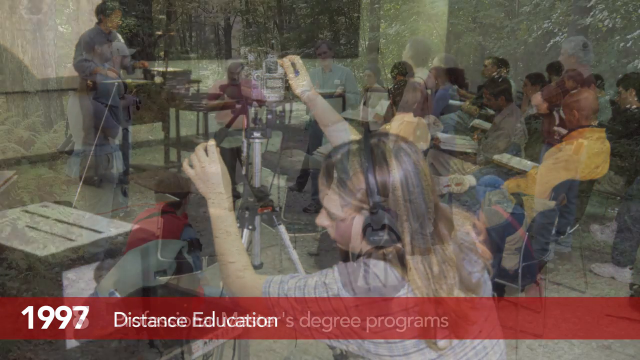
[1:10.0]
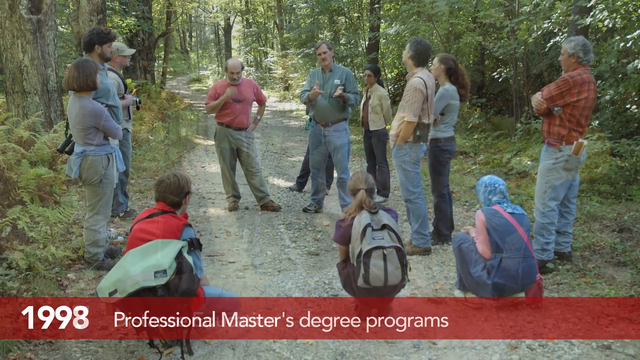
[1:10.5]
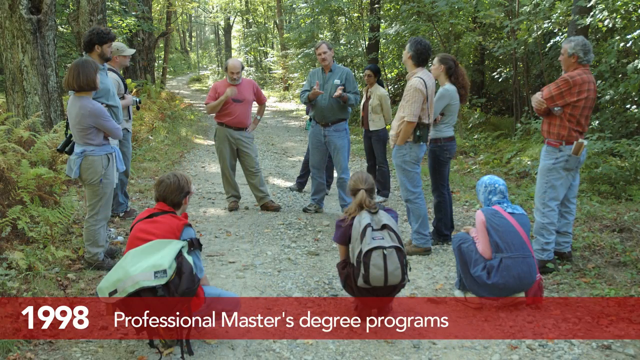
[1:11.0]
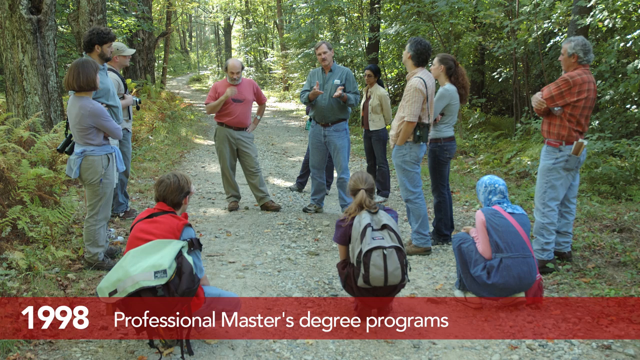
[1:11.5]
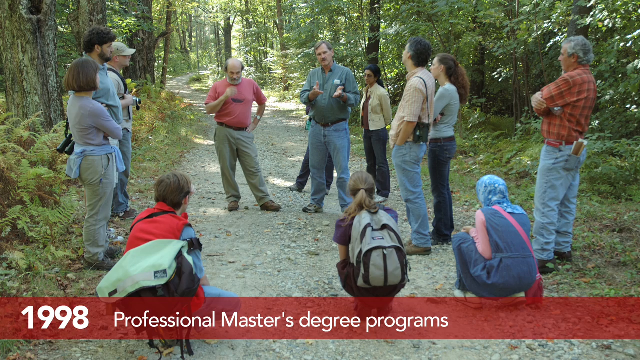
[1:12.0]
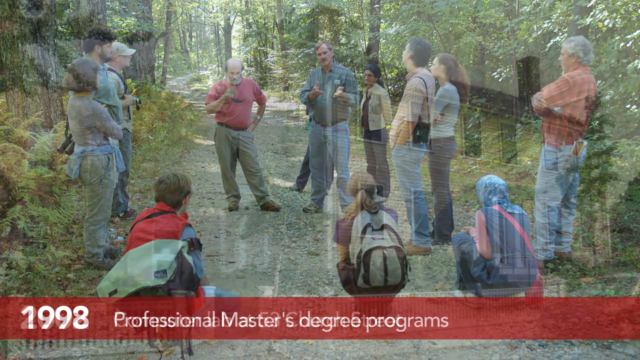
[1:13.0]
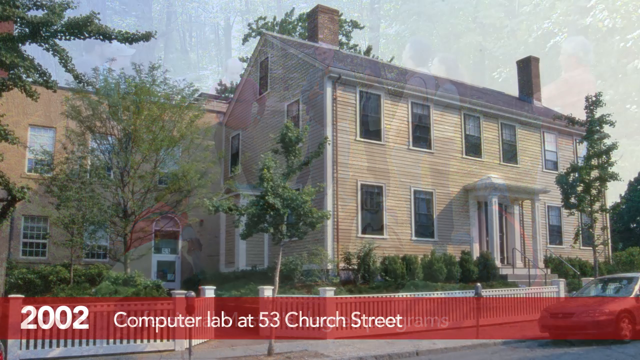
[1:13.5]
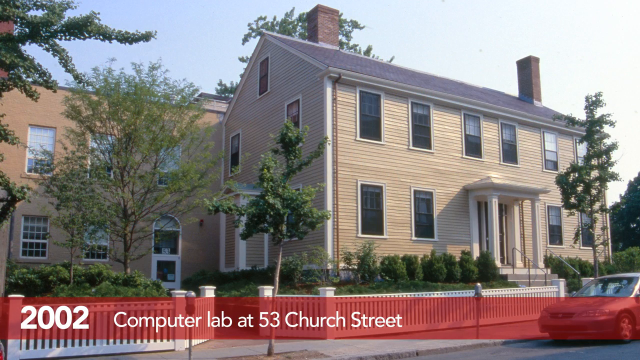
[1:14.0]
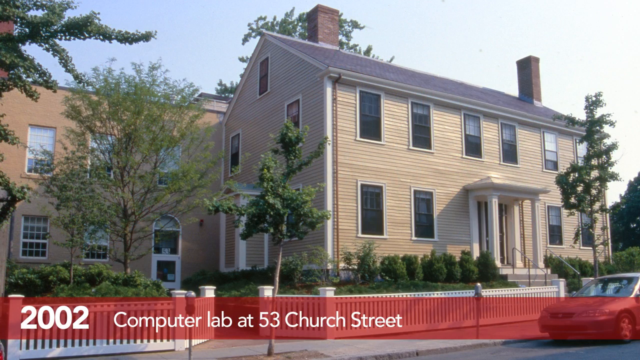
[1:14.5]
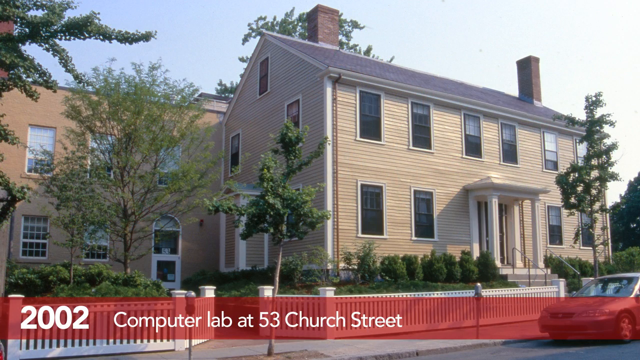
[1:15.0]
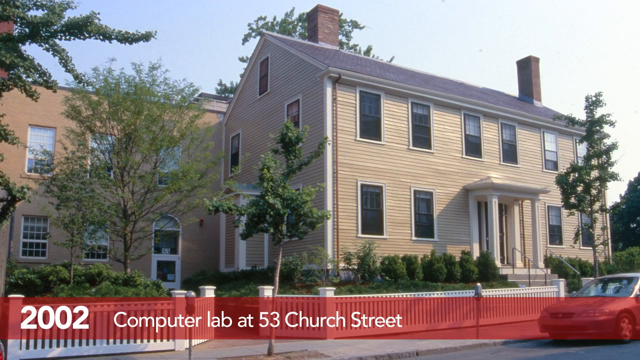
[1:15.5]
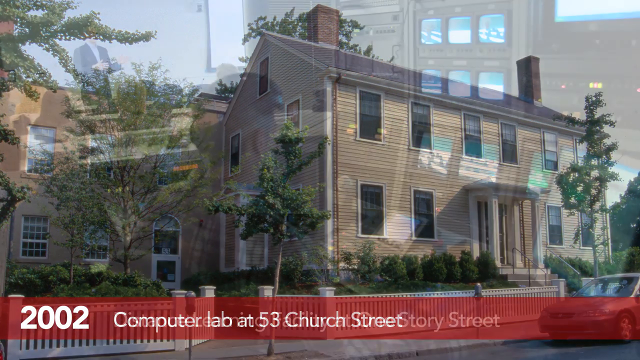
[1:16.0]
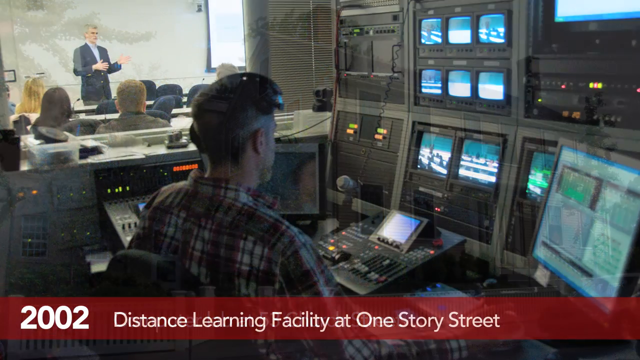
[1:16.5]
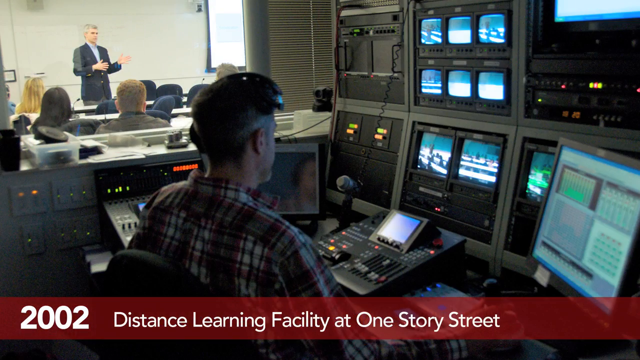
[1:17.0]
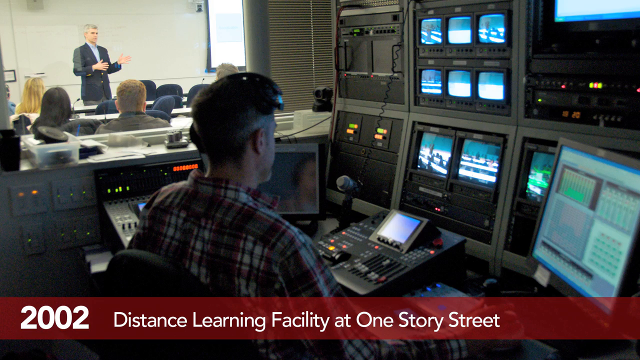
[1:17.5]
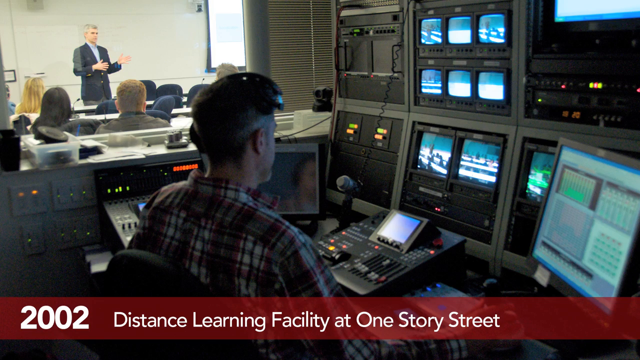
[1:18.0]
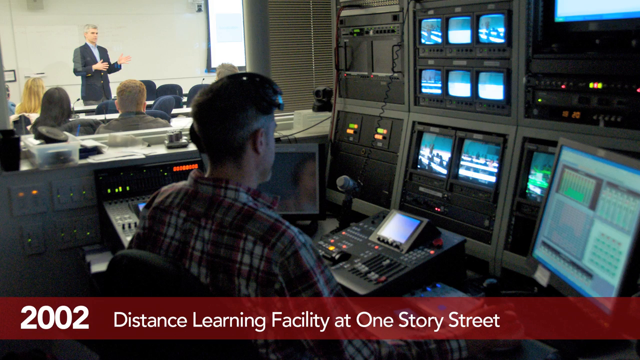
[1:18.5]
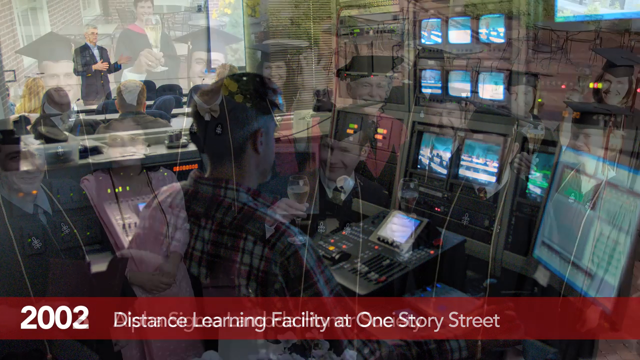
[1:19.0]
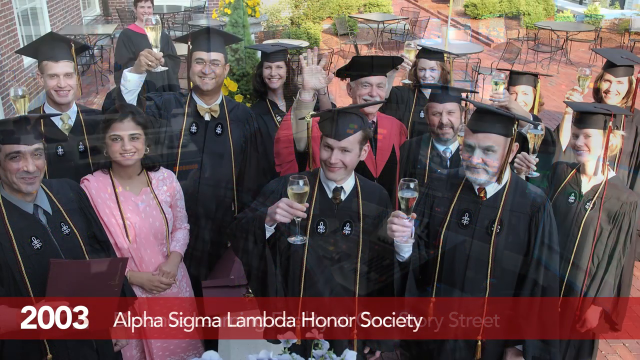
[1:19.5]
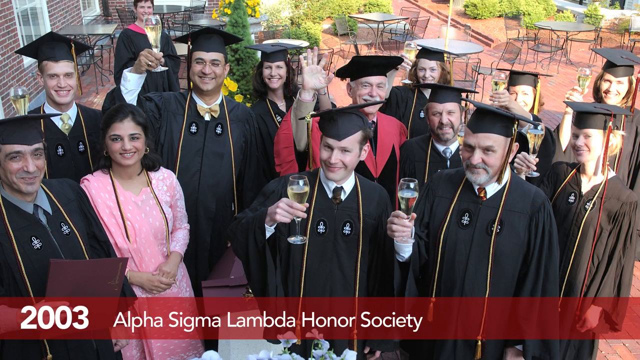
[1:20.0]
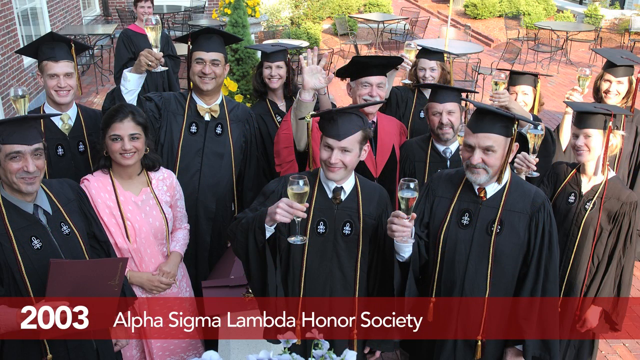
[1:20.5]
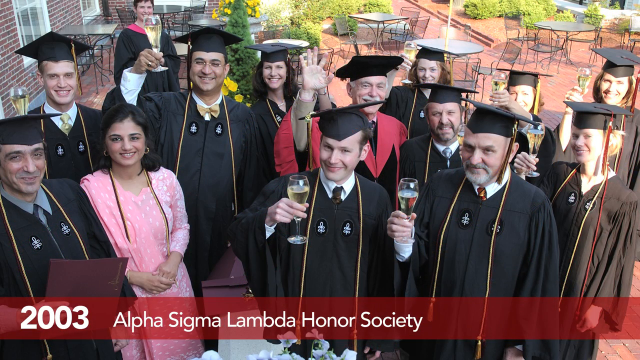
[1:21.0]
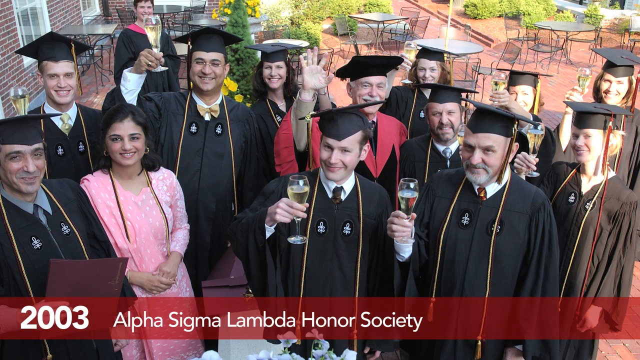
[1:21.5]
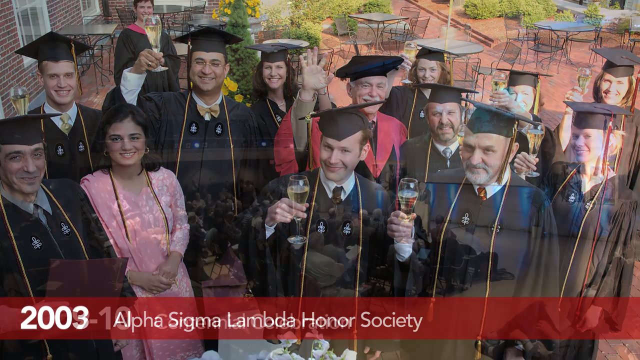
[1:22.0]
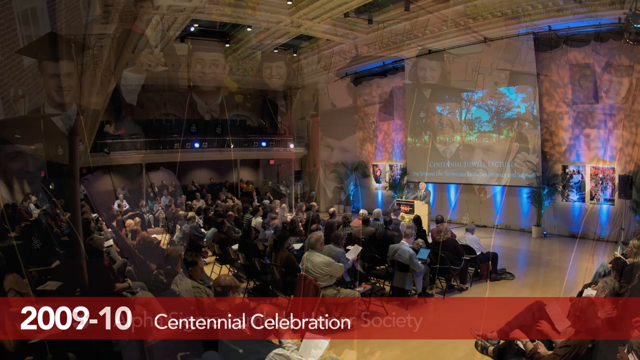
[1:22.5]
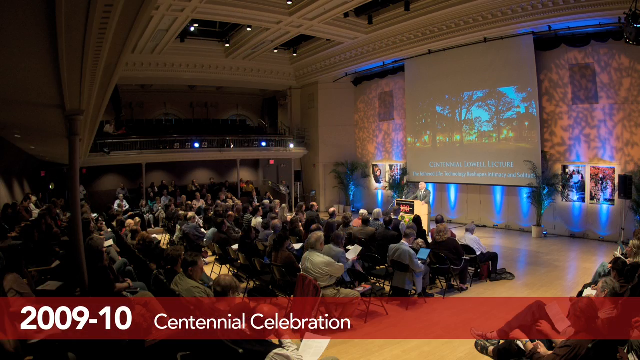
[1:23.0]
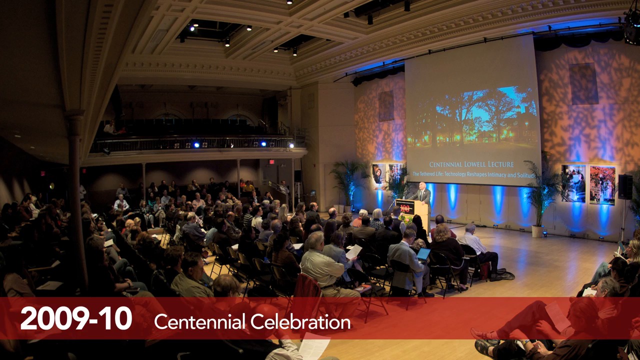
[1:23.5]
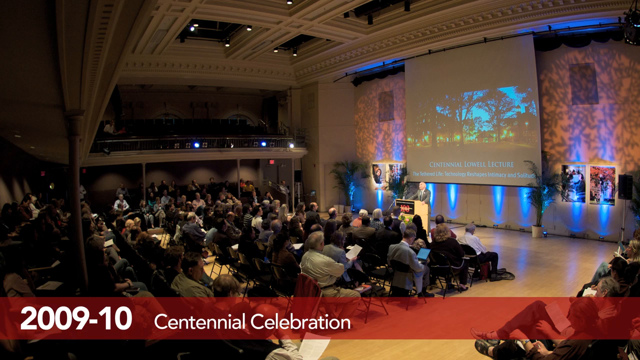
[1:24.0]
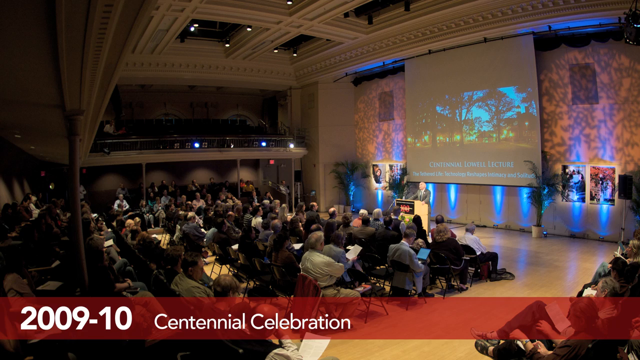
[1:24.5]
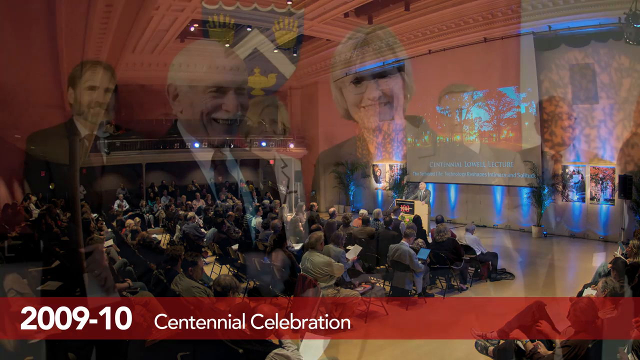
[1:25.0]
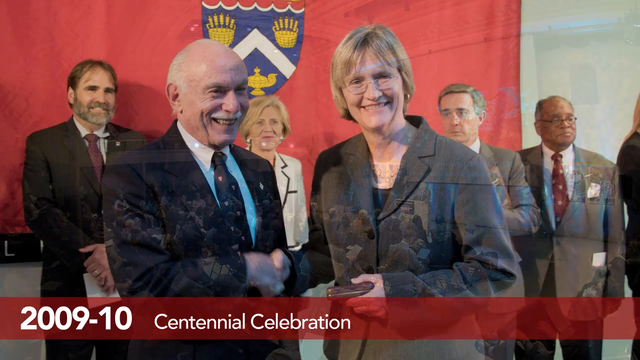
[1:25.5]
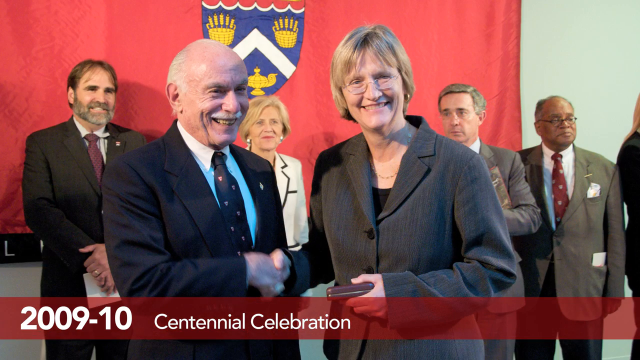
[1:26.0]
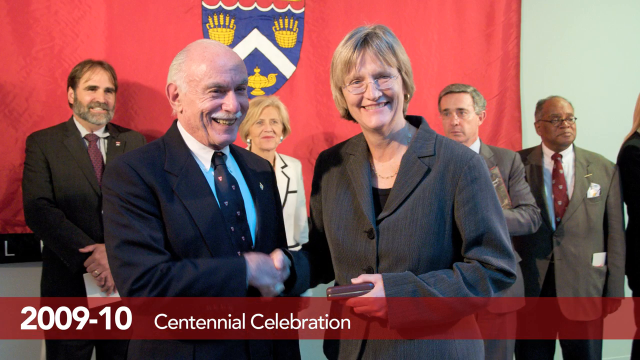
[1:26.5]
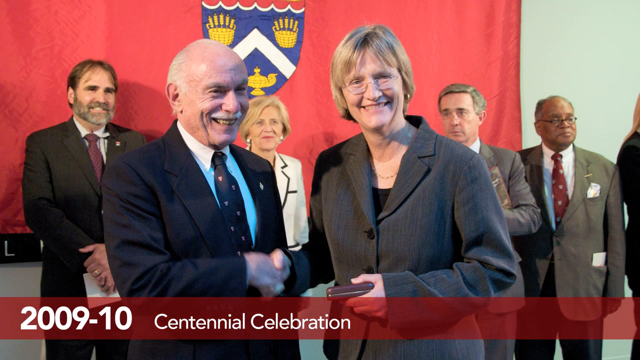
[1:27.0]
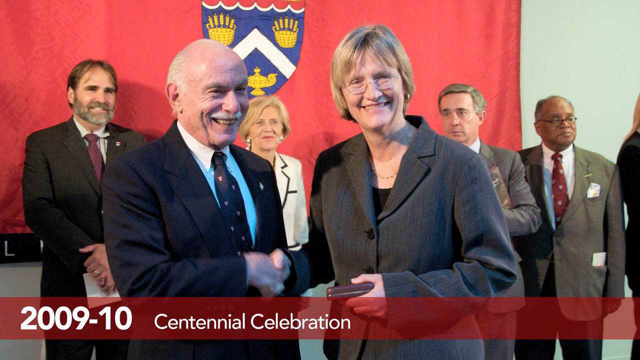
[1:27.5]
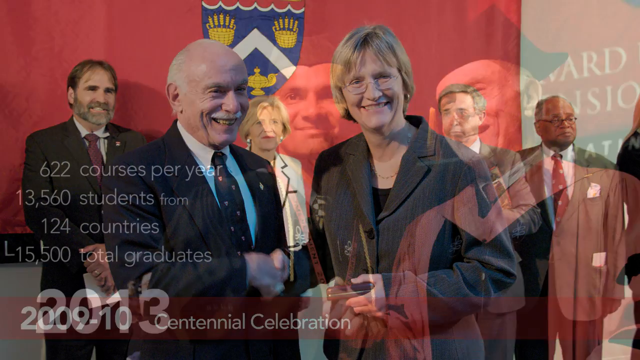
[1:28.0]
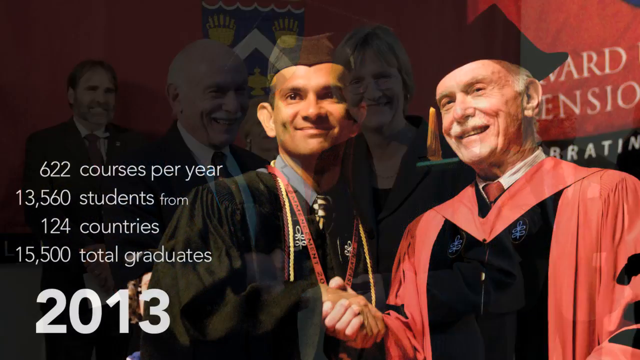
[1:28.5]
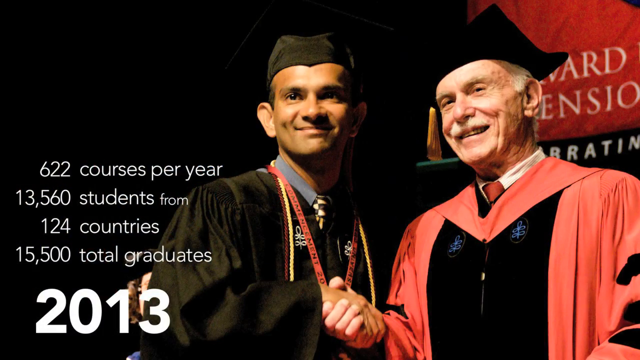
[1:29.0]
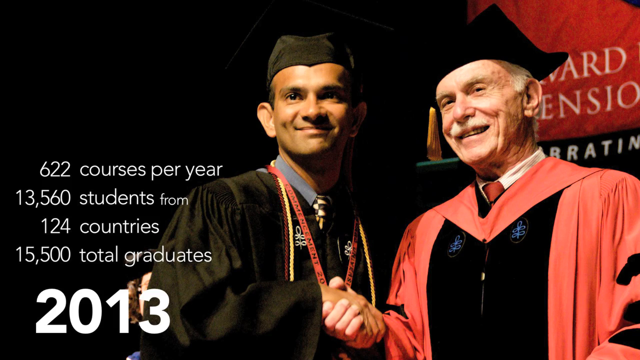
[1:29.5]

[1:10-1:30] Text reads "1998 professional master's degree program" over a group of what appear to be students standing in a forest; two or three of them are sitting and looking to their right. Two lecturers are explaining something, and others are carrying cameras. Next is a computer lab at 53 Church Street: the building is shown and then the view goes inside to a computer room, where a lecturer stands in front and people sit behind what seem to be computers, apparently around 23 of them. Behind him another lecturer is sitting in what seems to be a classroom. People then seem to be celebrating their graduation, holding glasses of champagne or something similar, and an Indian woman is drinking. A dean is also seen. The celebration continues inside a building in a big space.